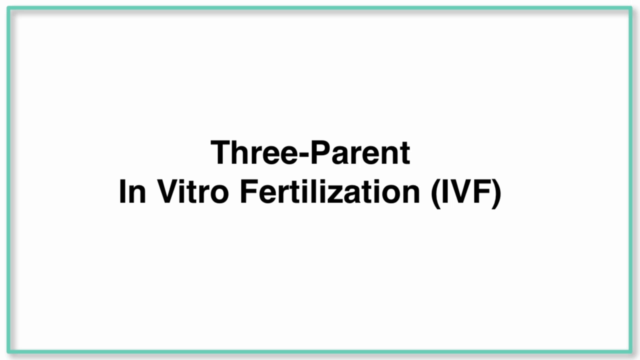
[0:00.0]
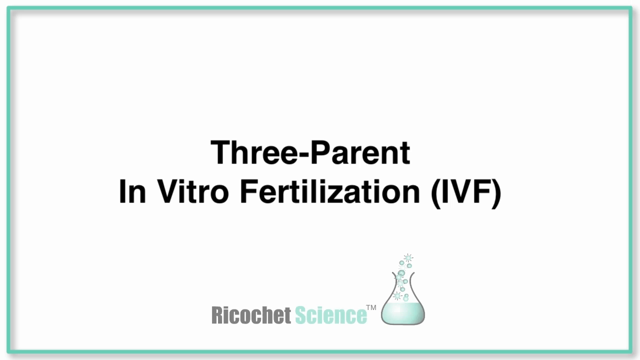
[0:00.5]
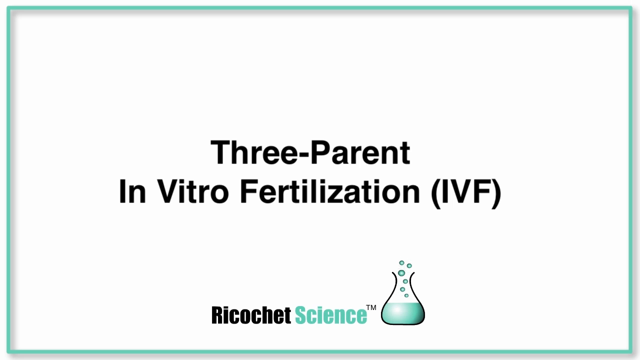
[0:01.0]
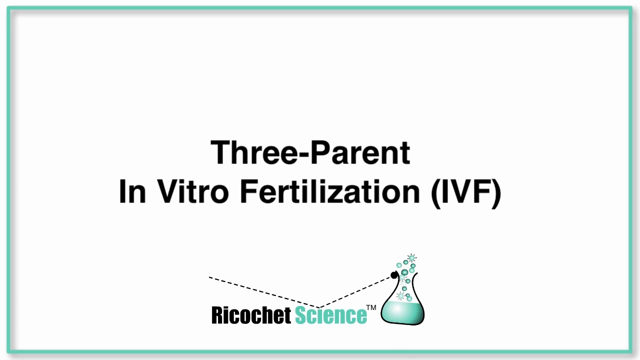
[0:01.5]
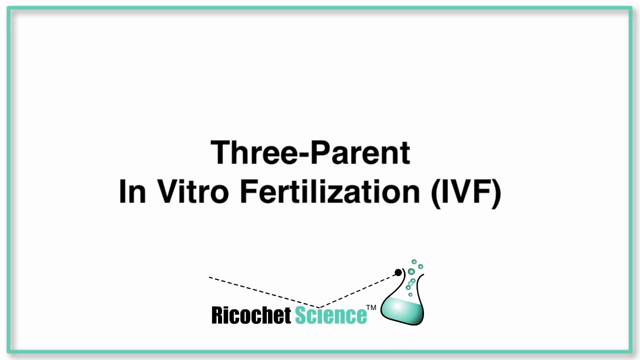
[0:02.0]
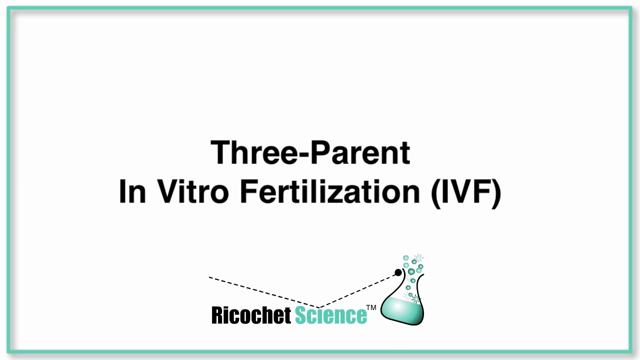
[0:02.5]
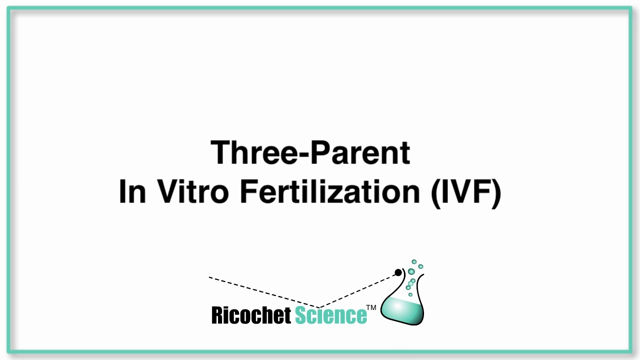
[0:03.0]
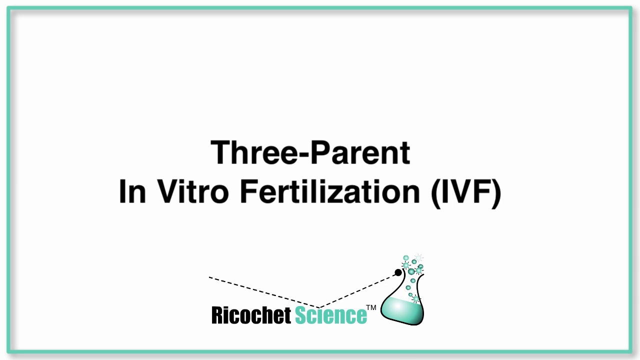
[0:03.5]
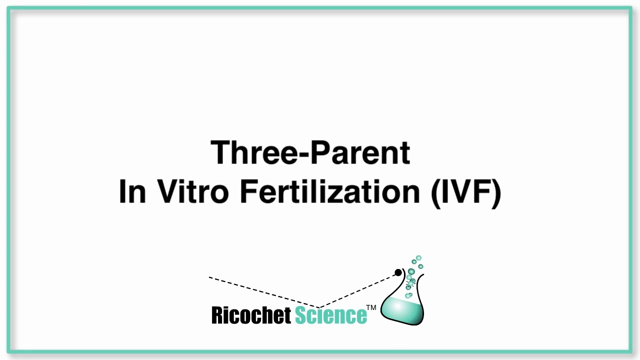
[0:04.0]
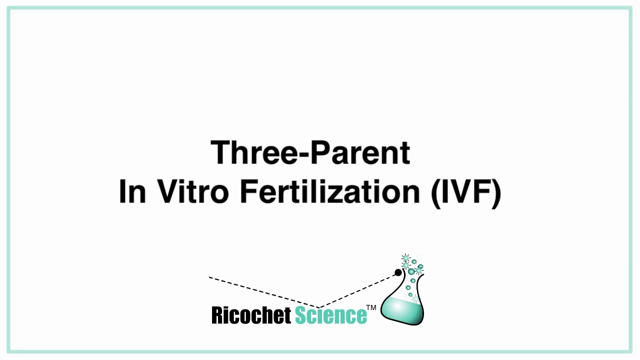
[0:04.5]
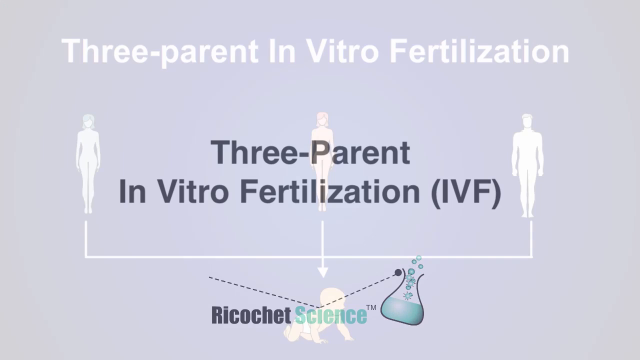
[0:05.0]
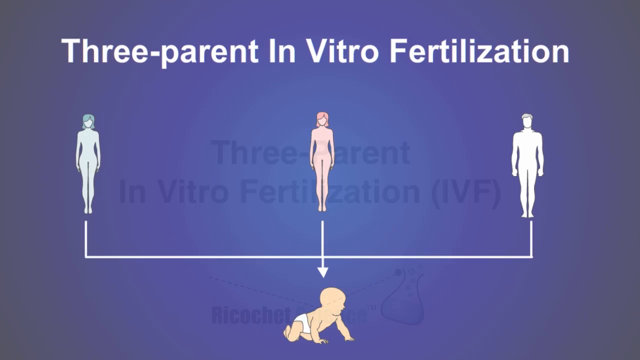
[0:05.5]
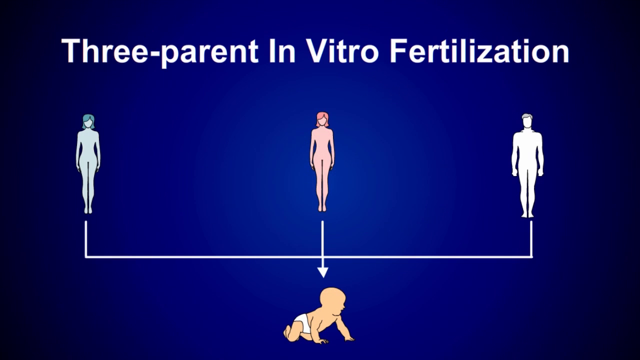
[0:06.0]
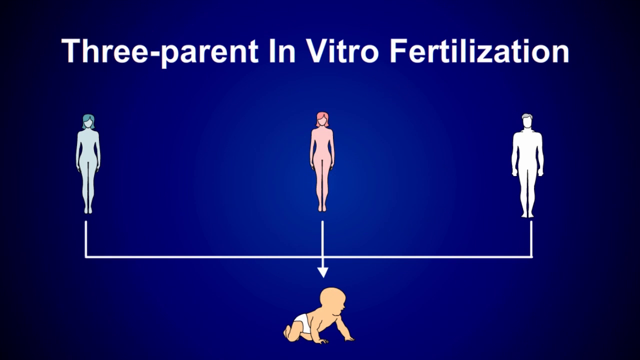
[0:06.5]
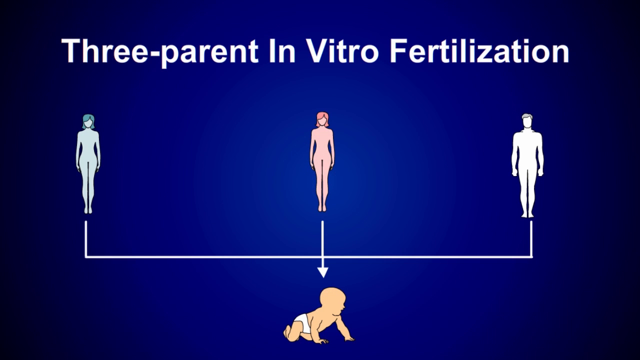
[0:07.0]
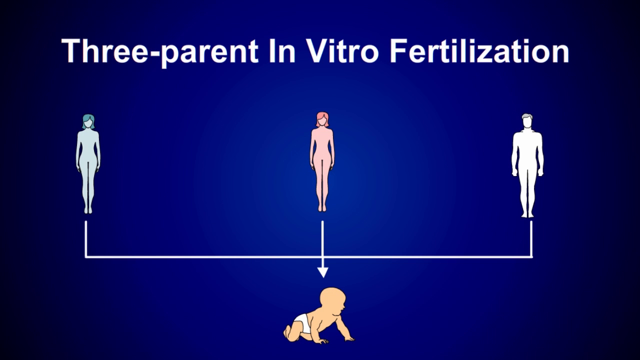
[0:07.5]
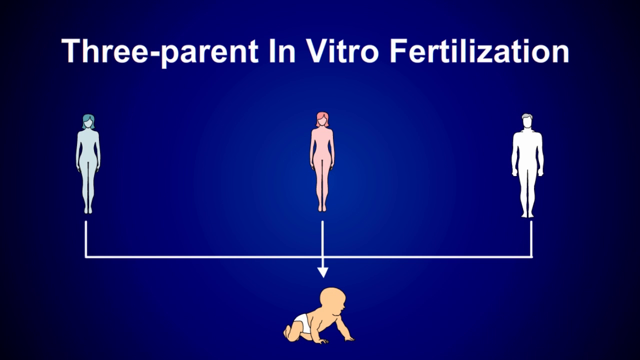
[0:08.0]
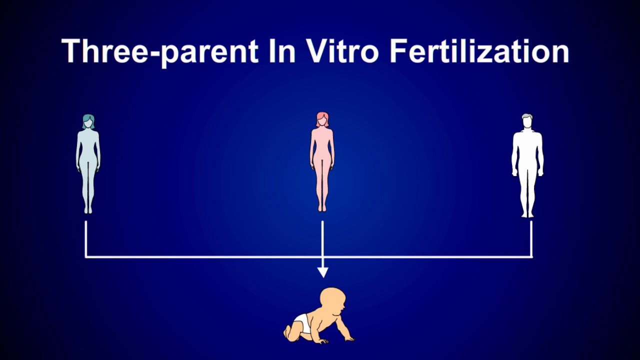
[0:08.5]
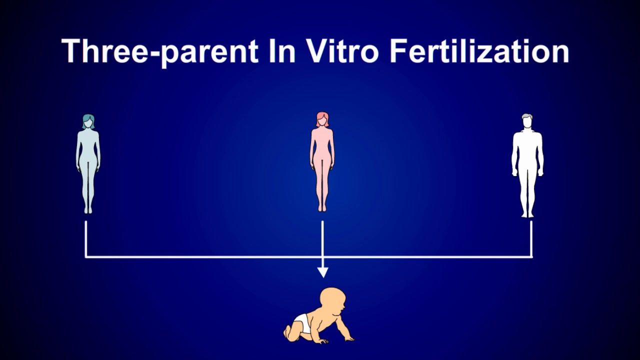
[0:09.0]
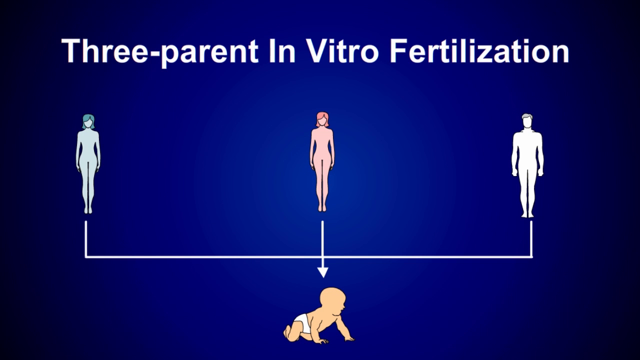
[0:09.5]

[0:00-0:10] The video concerns three-parent in vitro fertilization, IVF for short. Ricochet Science appears, and three-parent in vitro fertilization is illustrated with a diagram showing a person on the left, a person in the middle and a person on the right. A connecting line drawn on the screen links the person on the left all the way over to the person on the right. An arrow points down from the person in the middle to a crying baby below who wears a diaper. Everything is animated and digitally drawn.